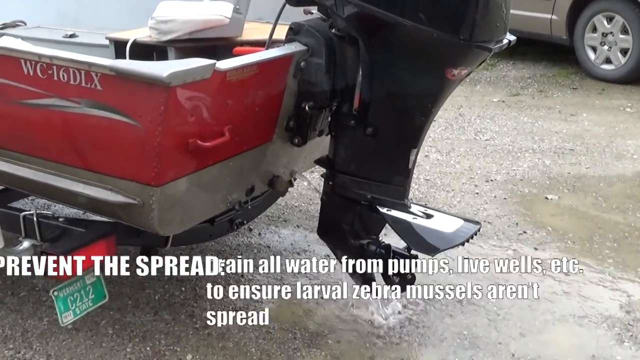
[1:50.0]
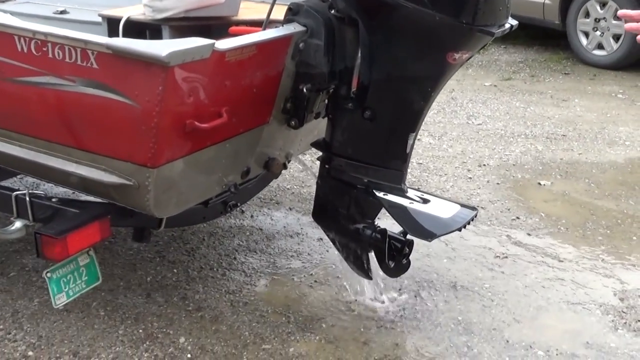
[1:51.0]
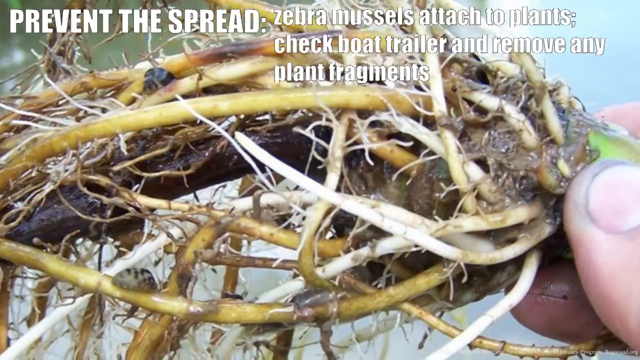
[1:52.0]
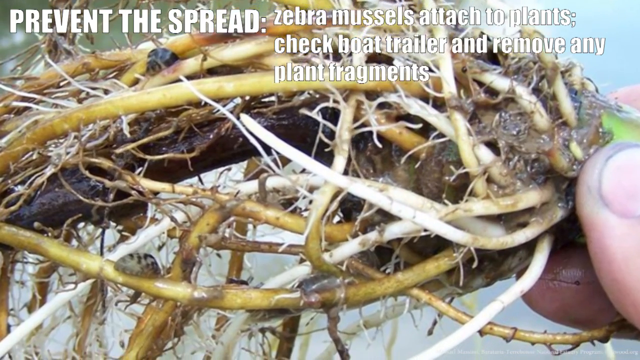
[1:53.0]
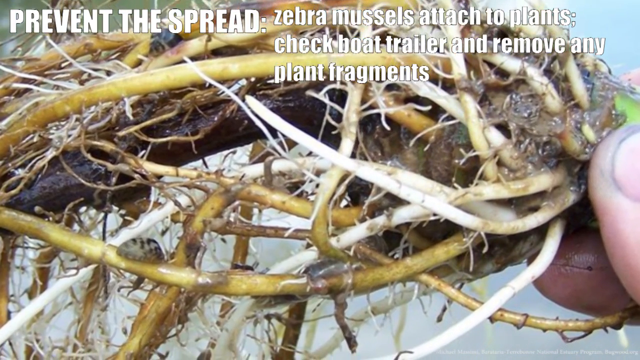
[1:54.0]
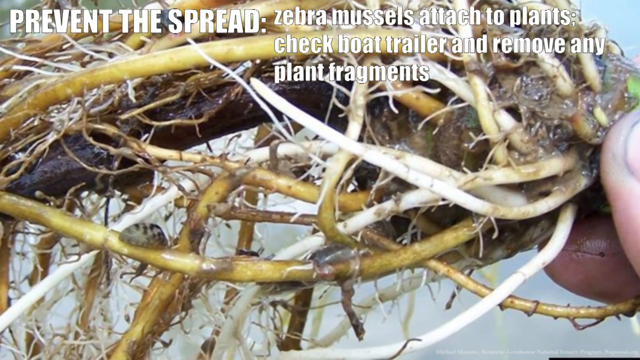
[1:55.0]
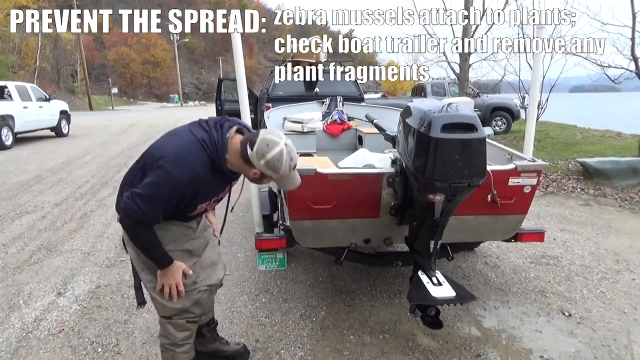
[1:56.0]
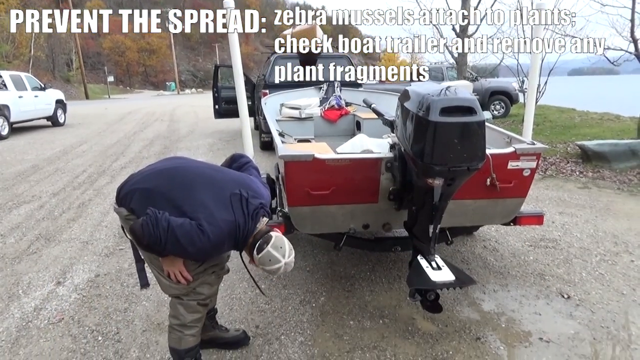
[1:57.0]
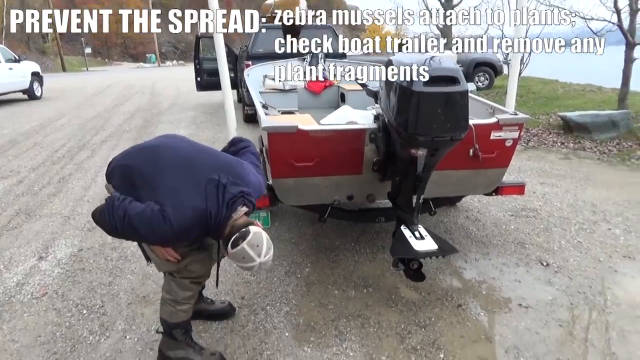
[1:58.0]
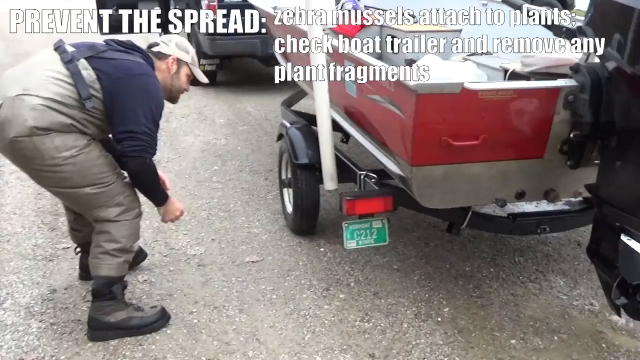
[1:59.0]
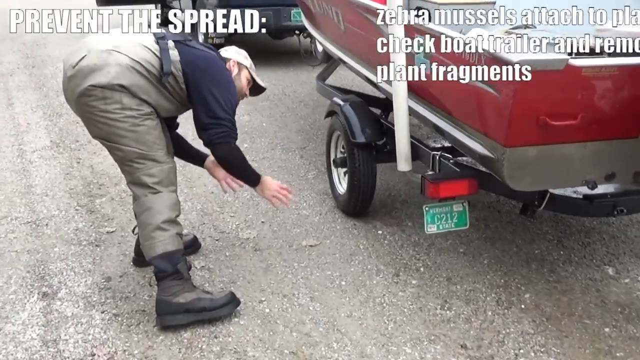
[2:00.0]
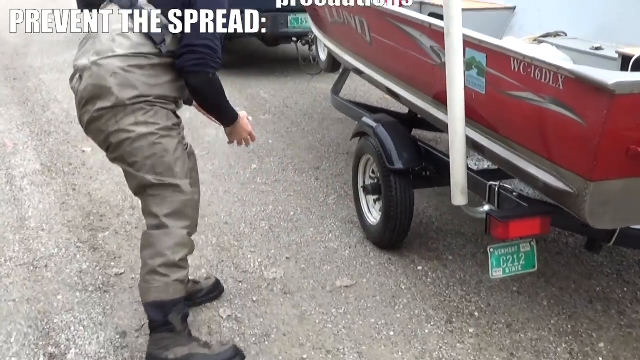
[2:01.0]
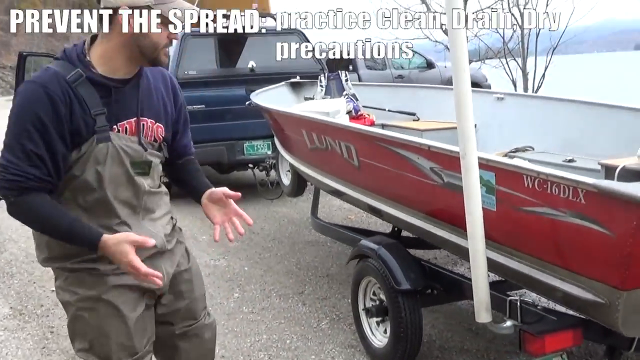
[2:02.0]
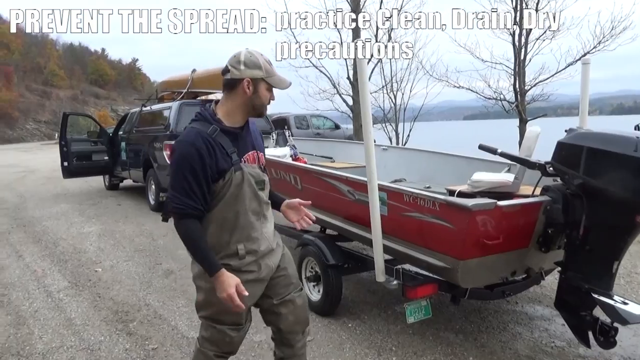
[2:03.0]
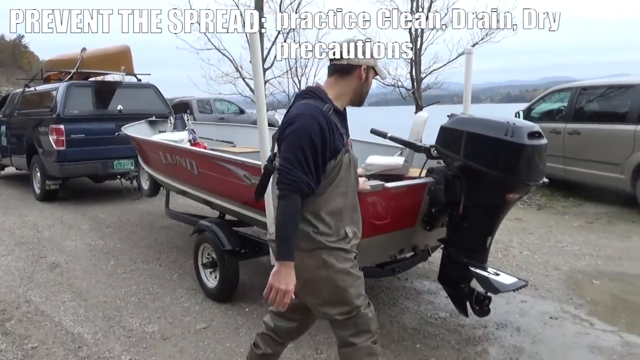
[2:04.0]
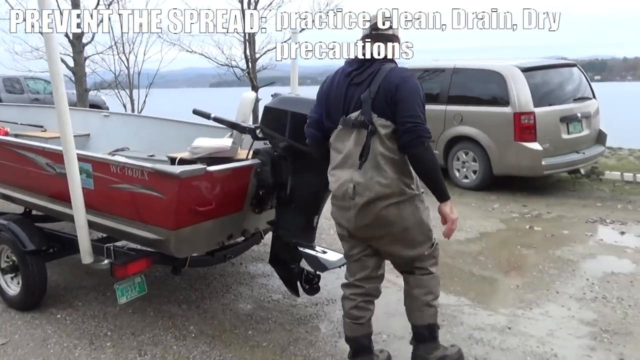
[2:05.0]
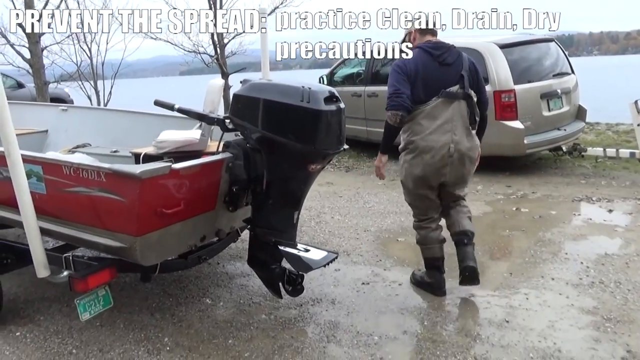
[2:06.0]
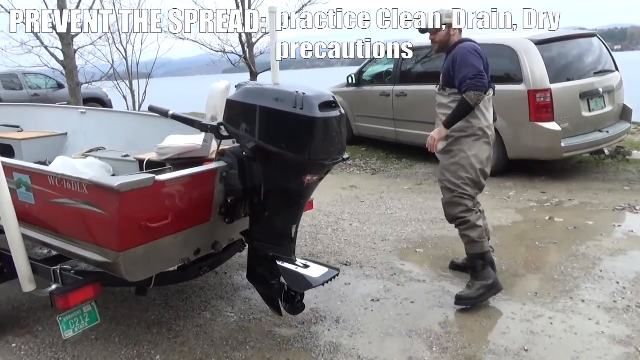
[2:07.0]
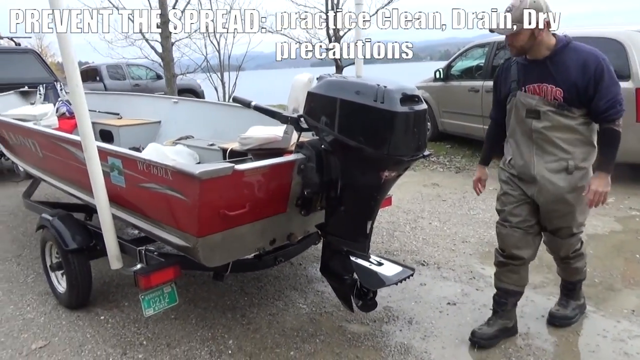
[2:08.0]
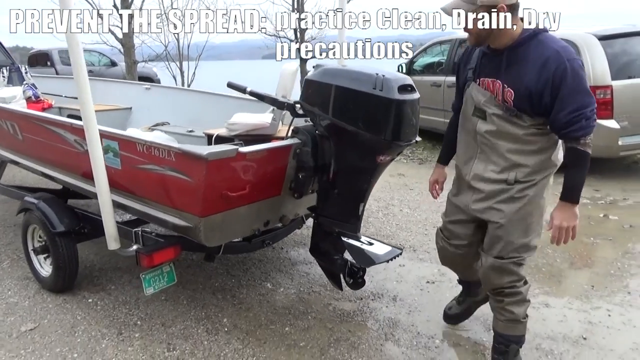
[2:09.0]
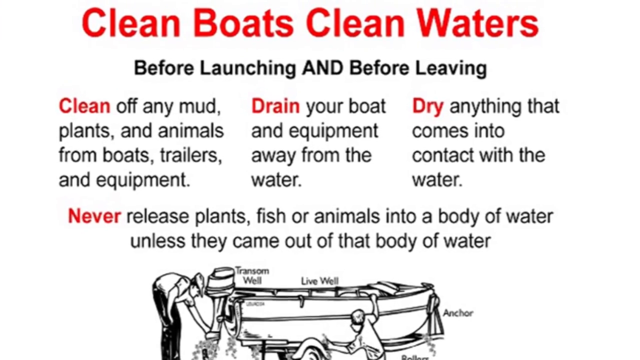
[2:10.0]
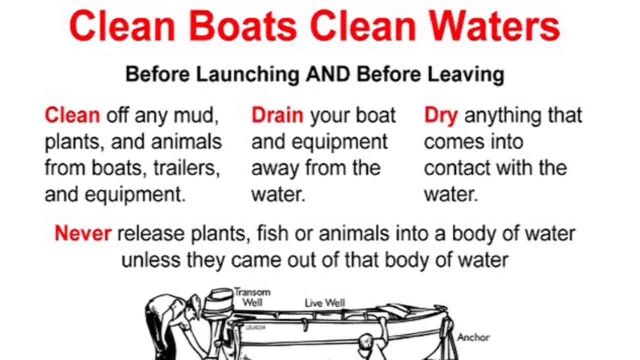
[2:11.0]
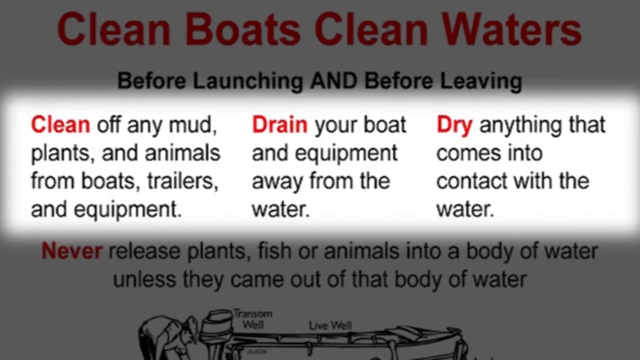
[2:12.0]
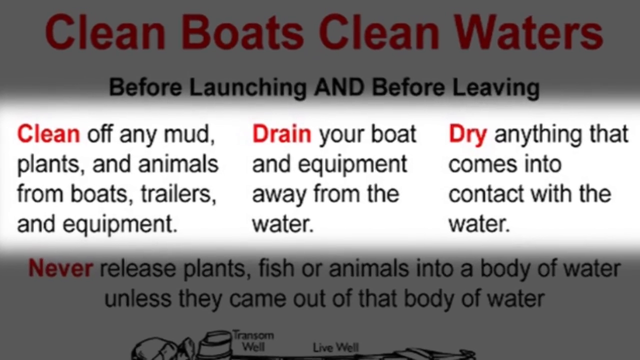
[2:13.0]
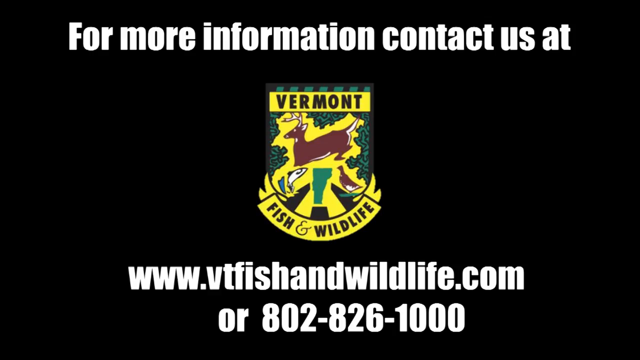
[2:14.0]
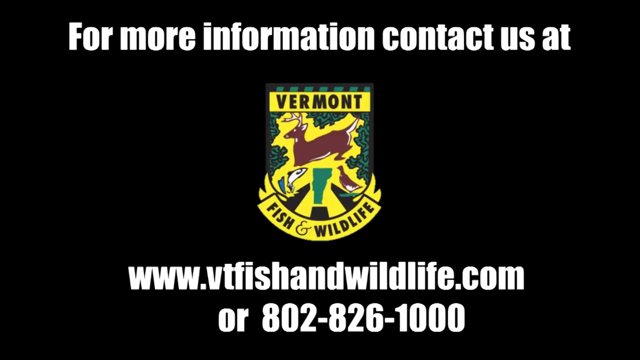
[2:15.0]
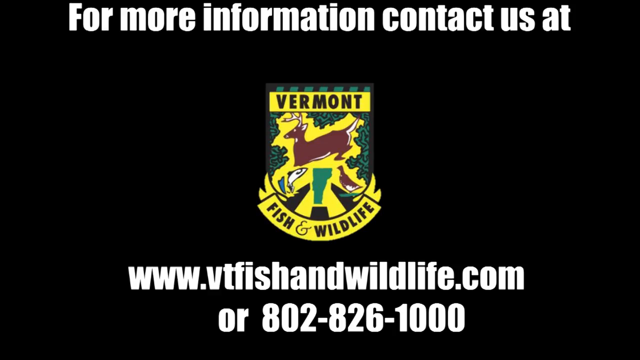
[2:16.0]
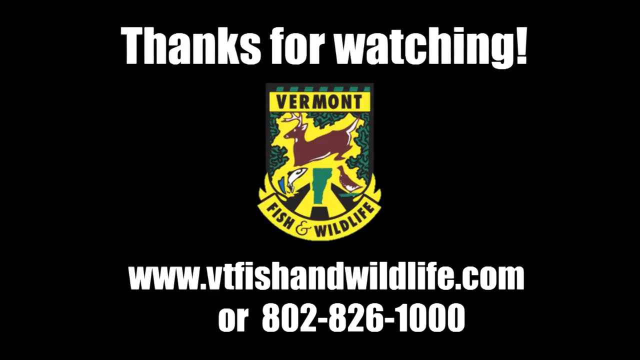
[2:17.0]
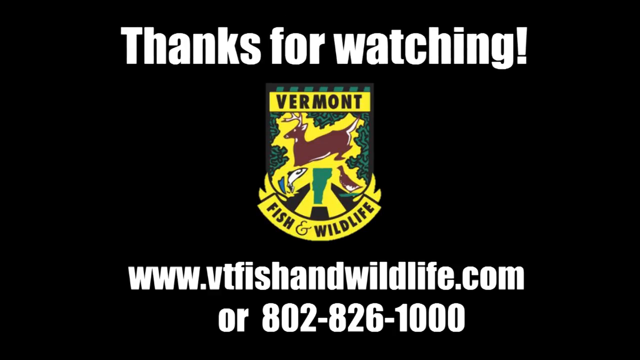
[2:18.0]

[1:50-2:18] White letters at the bottom center of the screen read "prevent the spread. Drain all water from pumps, live wells, et cetera, to ensure larval zebra mussels aren't spread." The back of a boat is shown, with a close view of the motor and its propeller as the boat drains. Finally, problems resulting from the spread of the zebra mussel appear: tangled lines and vegetation.